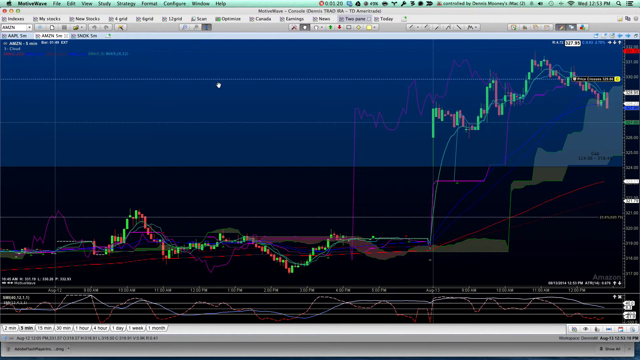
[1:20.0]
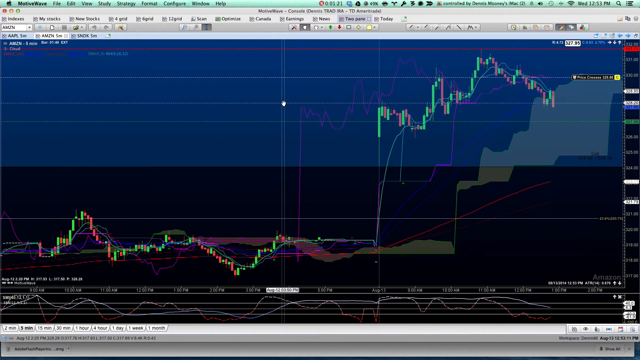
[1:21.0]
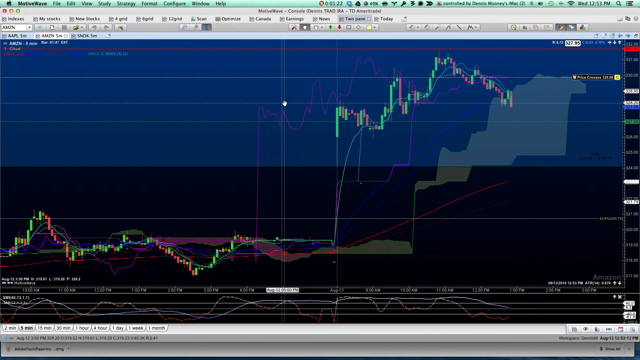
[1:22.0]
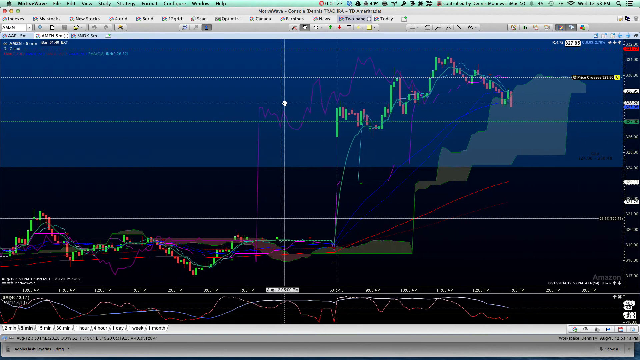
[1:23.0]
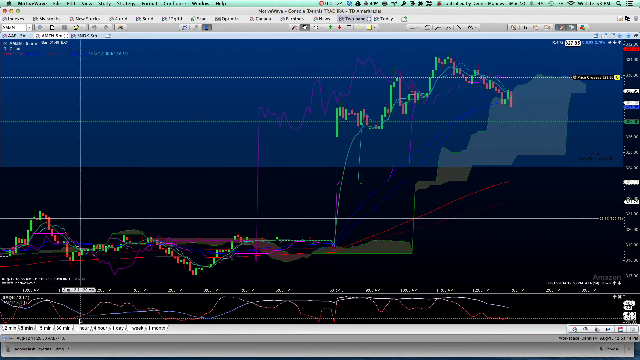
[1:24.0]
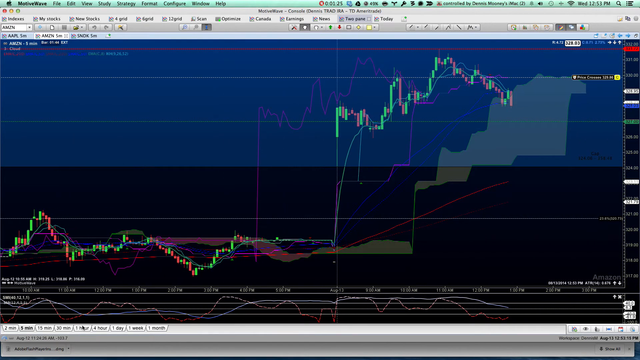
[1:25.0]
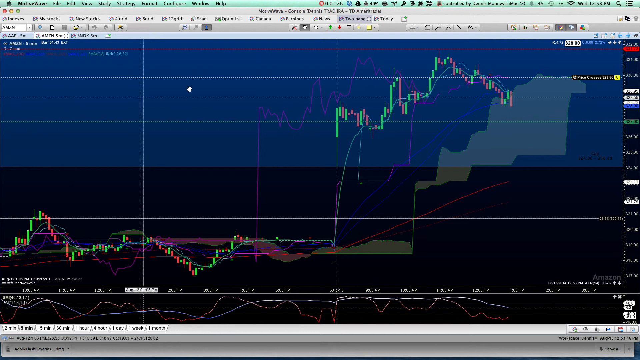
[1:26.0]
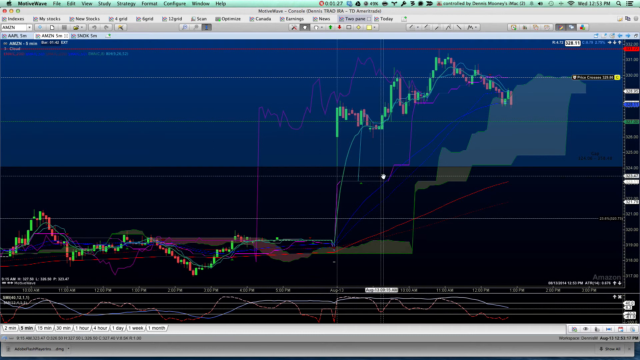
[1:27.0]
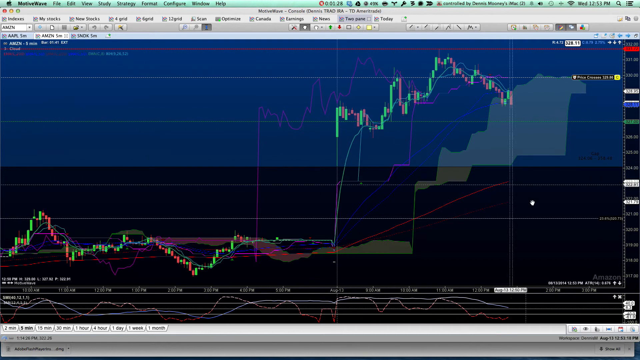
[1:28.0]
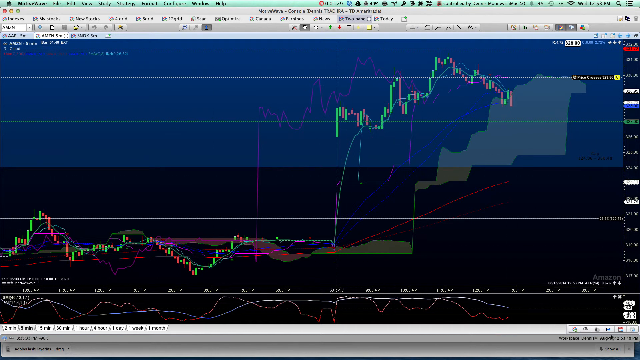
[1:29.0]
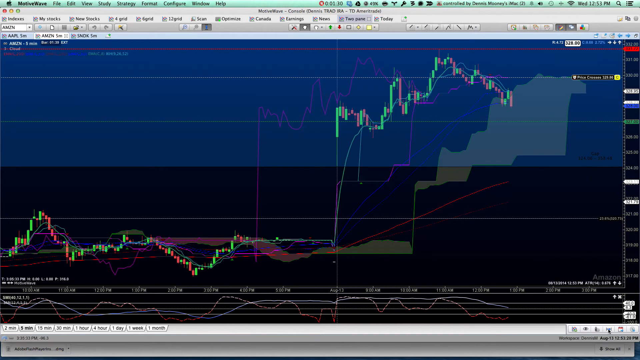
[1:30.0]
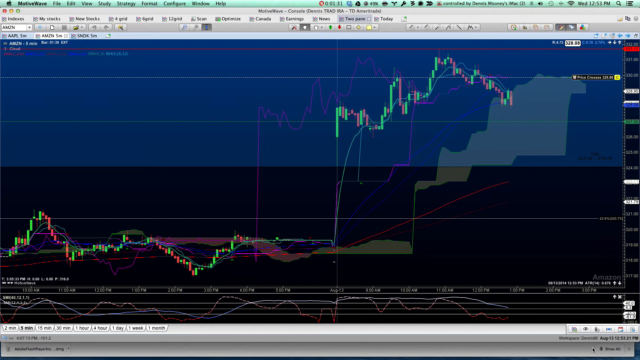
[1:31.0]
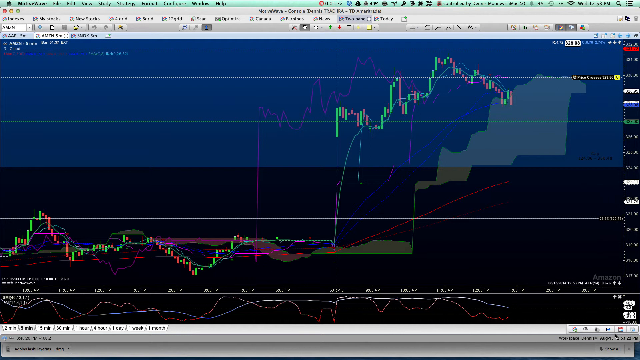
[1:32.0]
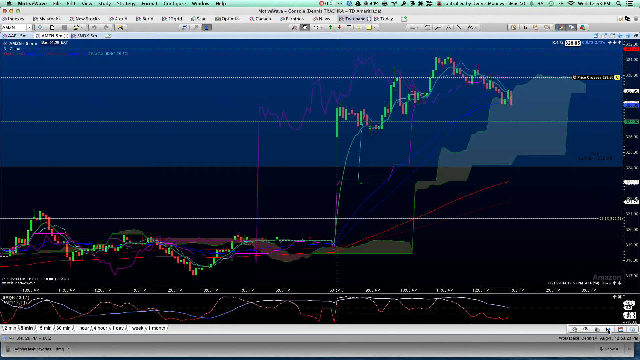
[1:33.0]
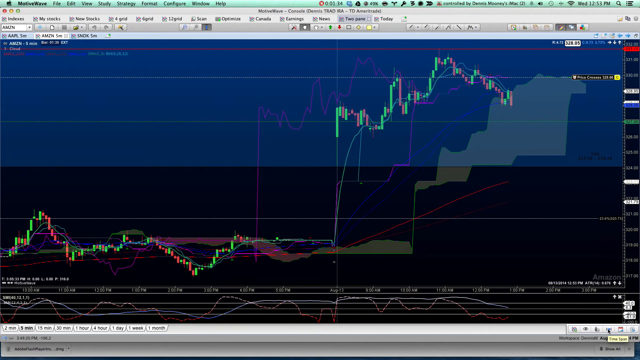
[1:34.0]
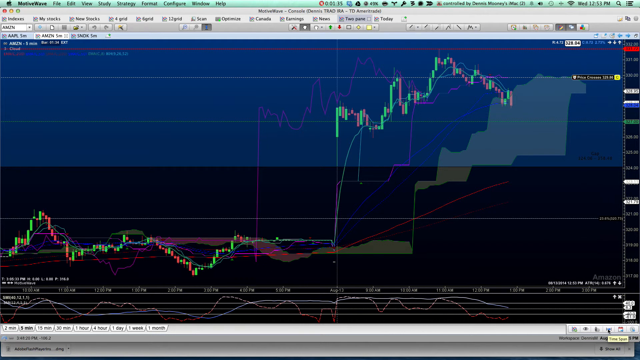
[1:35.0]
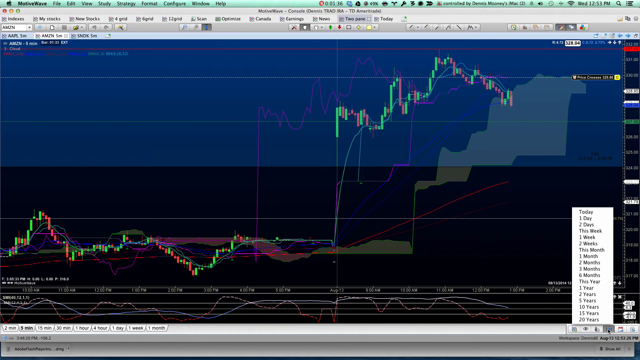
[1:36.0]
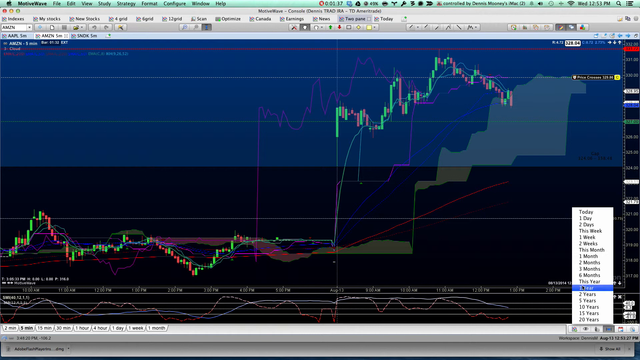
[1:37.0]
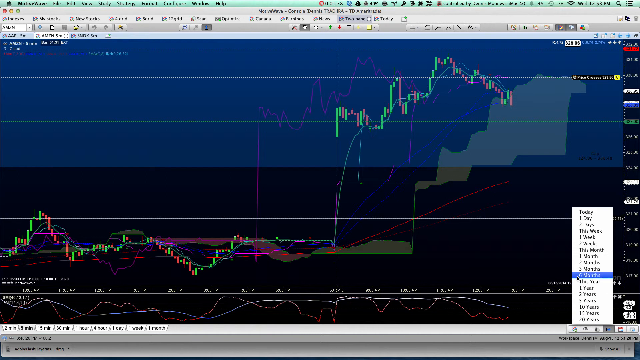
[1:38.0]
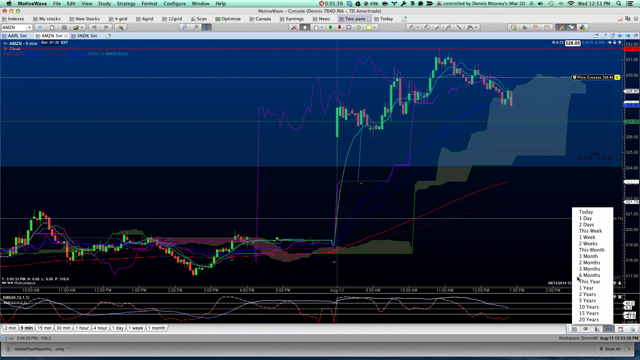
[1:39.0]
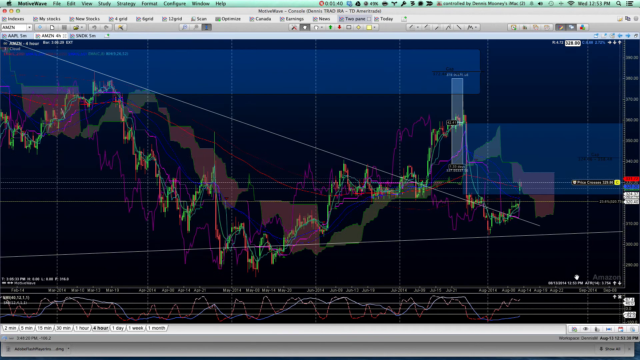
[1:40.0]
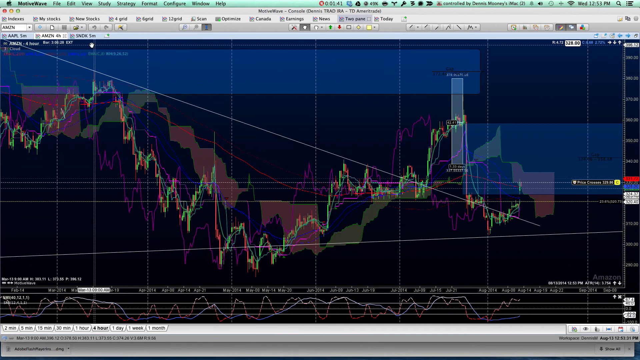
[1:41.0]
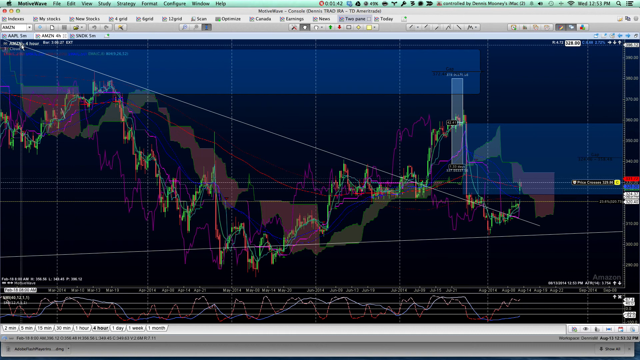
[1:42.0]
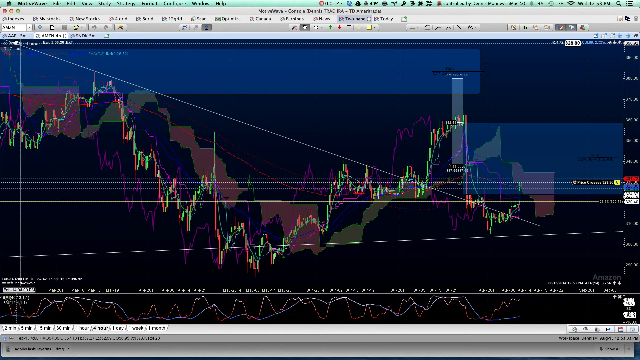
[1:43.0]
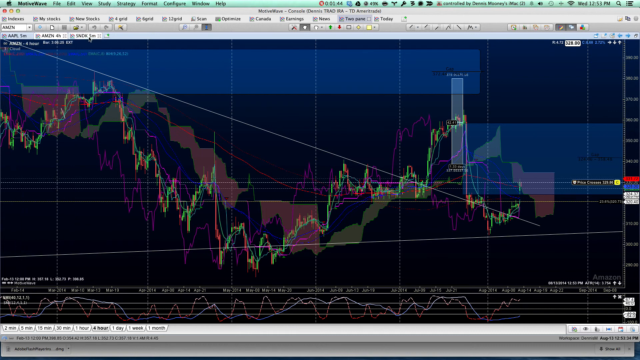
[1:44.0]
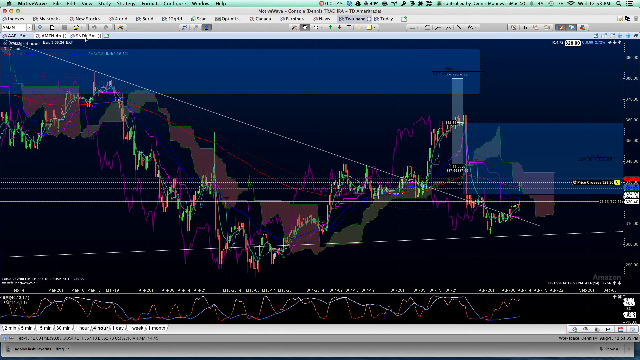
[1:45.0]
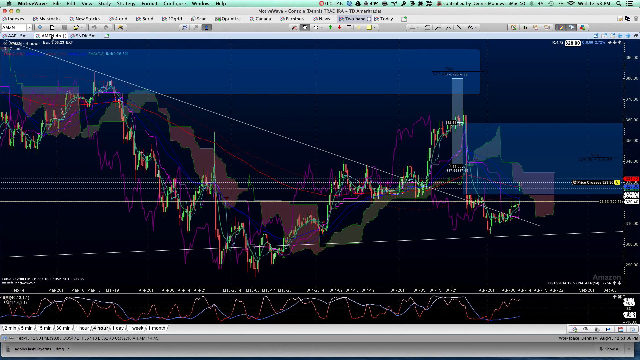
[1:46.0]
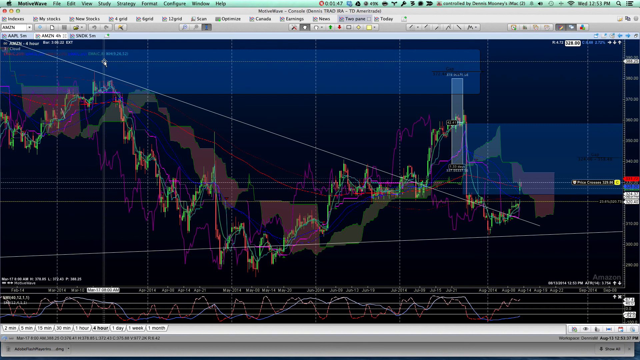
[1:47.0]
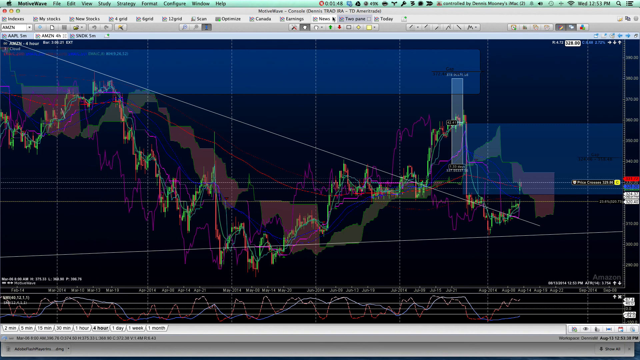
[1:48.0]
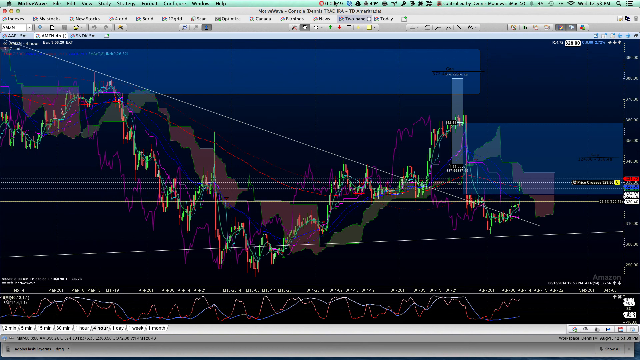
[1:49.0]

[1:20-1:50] The user has changed to a different candle chart, which seems to be for the AAPL stock, though it is quite blurry. There are four horizontal dividing lines, and the user moves the chart over to the right a bit. The candle lines stay below the first horizontal line until roughly halfway, then spike up and cross all the way to the fourth horizontal line, reaching a new peak before going down again and hovering between the fourth and third lines. A bunch of other lines follow along with it; some look more conservative, reaching barely maybe halfway of the length of the candle chart, while others stay below it and, once the candle chart stops, go all the way up to touch the bottom of the candles. These are possibly prediction lines or some other sort of chart lines. The user scrolls the mouse left and right, then goes to the bottom right corner where there are a bunch of options, clicks a button that seems to set a specific time period, and selects six months. The chart switches to one that looks very much like it has been crashing: it starts sort of high, goes up a bit more, crashes down to half or more than half of its original value, climbs back up close to where it was, then crashes down again to between the original points and the high points. The user moves the mouse to the top and clicks on a button.